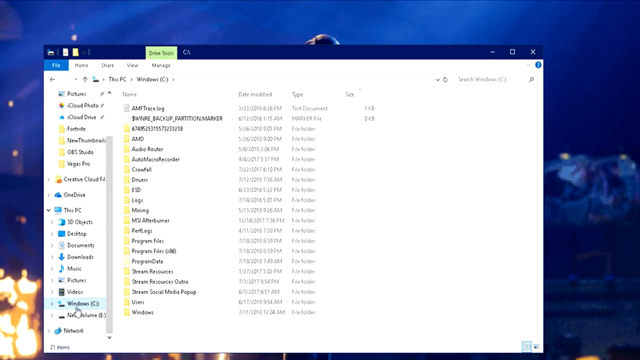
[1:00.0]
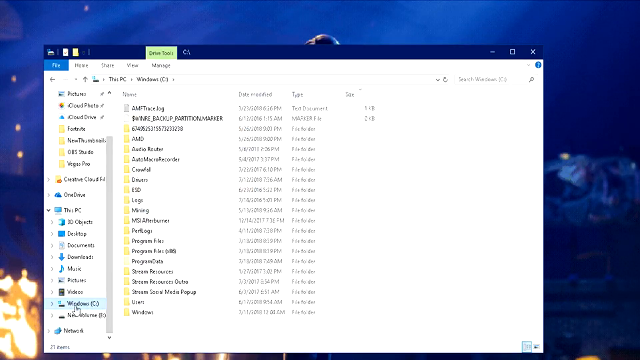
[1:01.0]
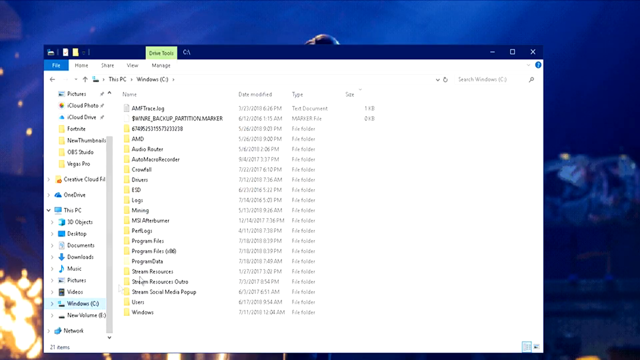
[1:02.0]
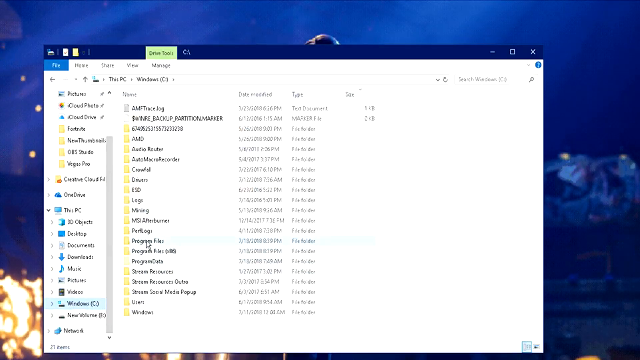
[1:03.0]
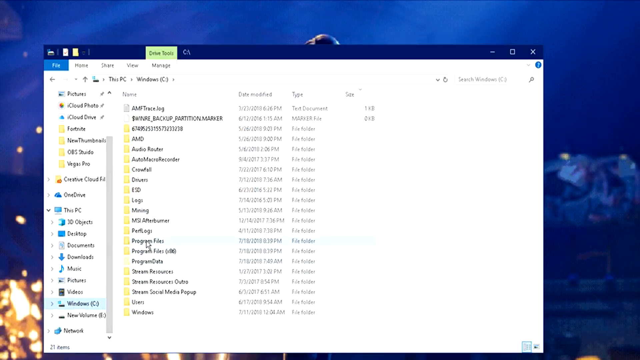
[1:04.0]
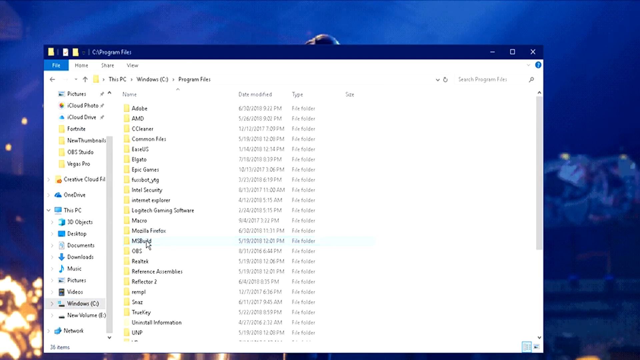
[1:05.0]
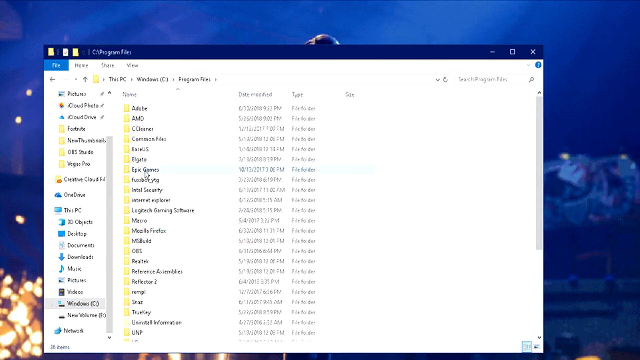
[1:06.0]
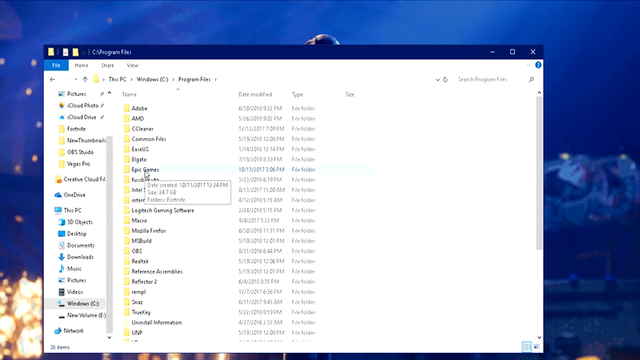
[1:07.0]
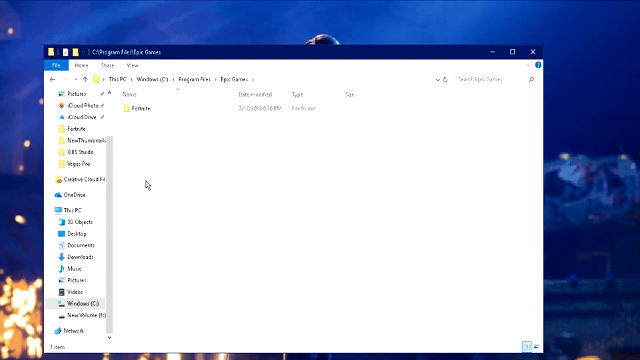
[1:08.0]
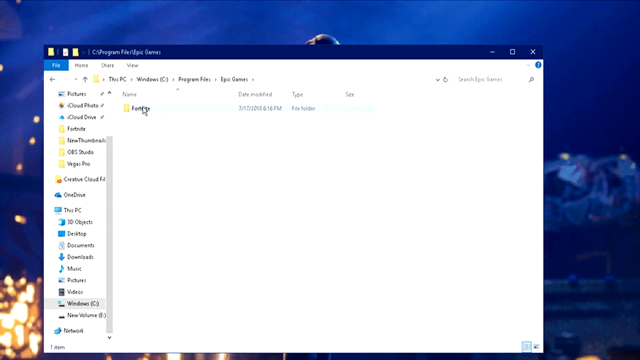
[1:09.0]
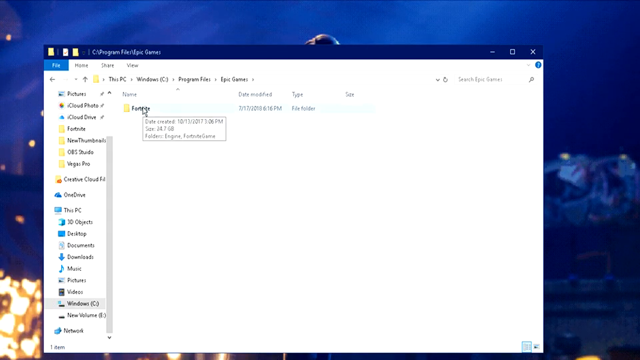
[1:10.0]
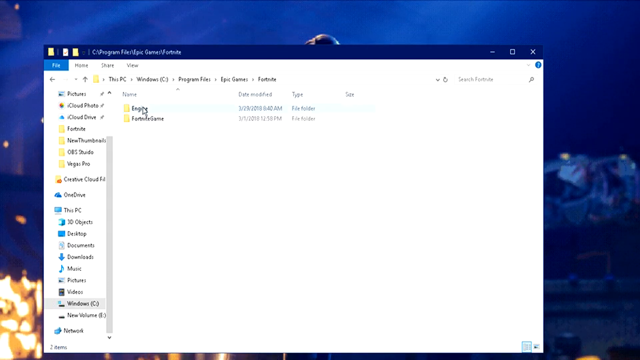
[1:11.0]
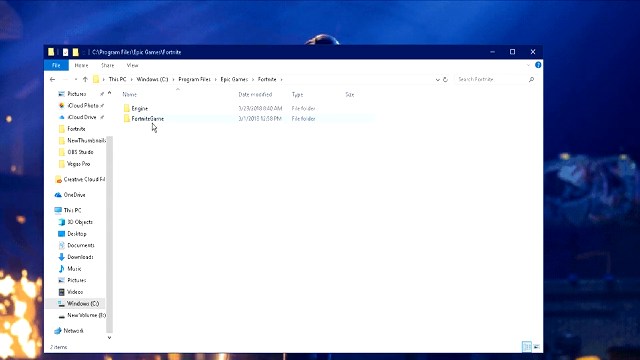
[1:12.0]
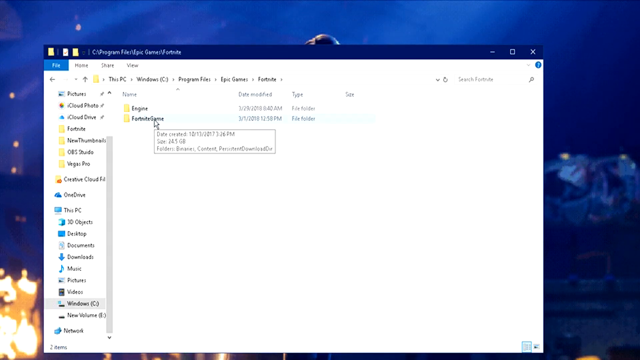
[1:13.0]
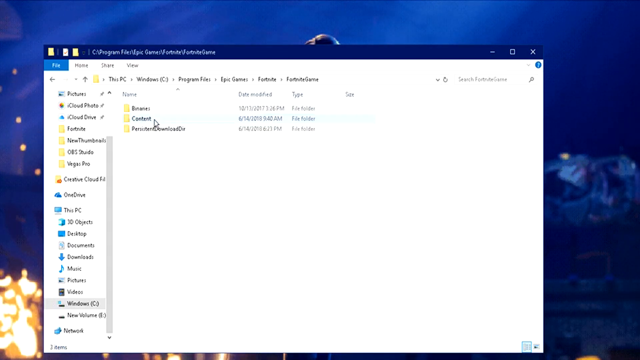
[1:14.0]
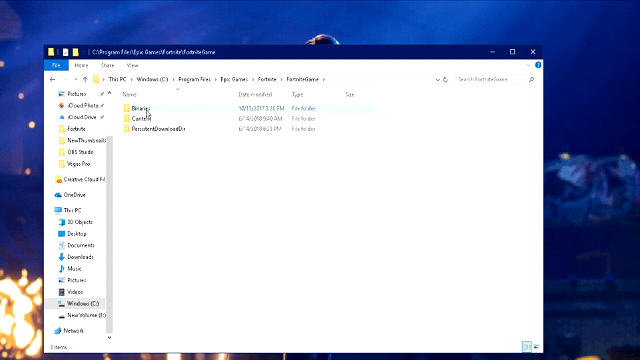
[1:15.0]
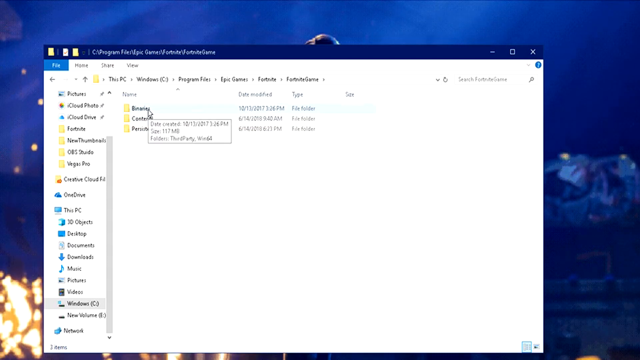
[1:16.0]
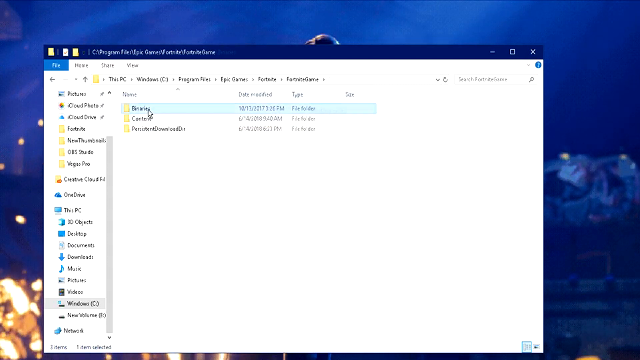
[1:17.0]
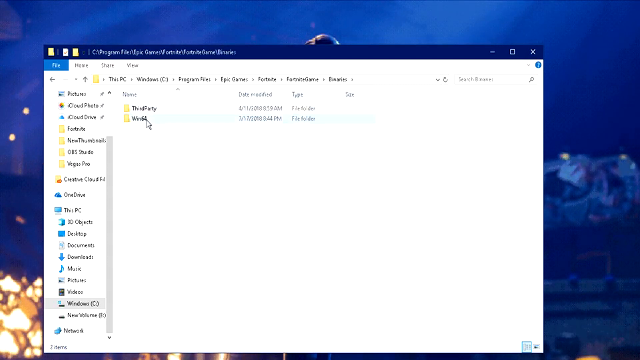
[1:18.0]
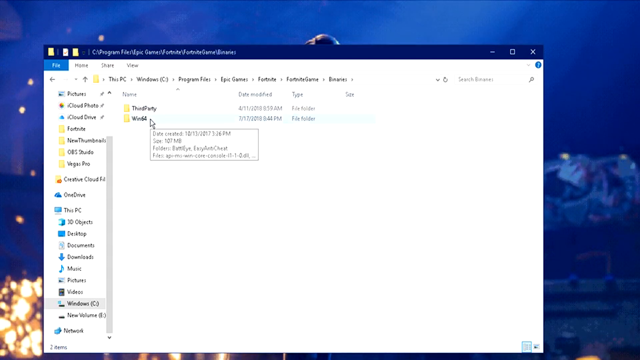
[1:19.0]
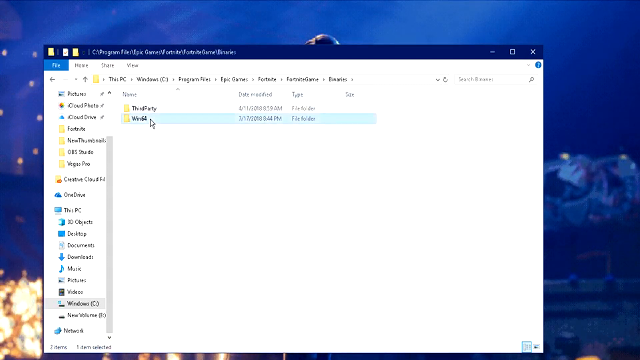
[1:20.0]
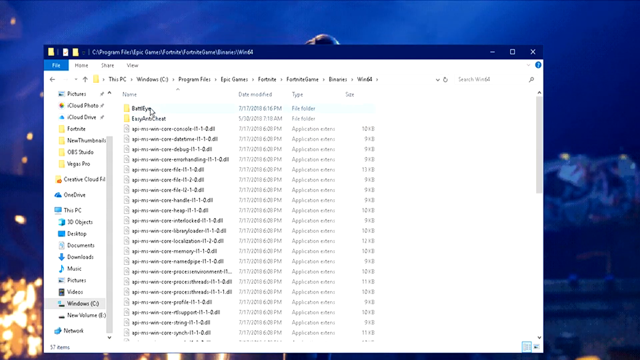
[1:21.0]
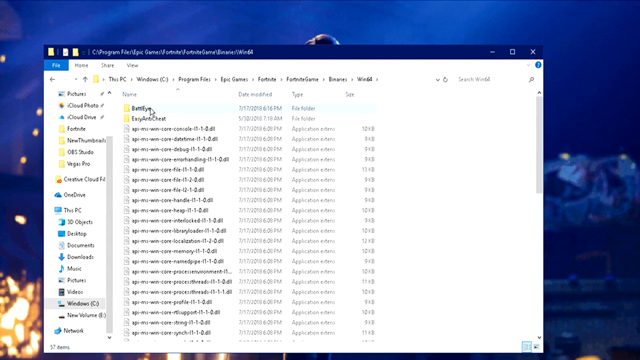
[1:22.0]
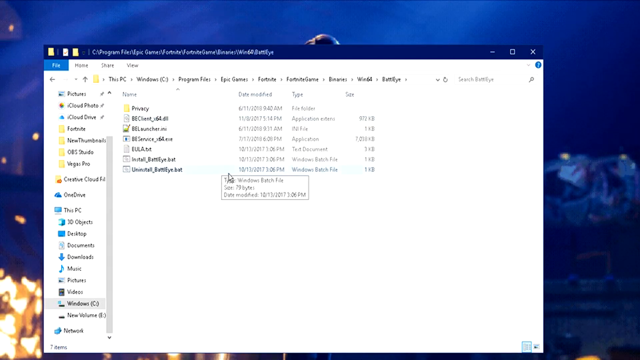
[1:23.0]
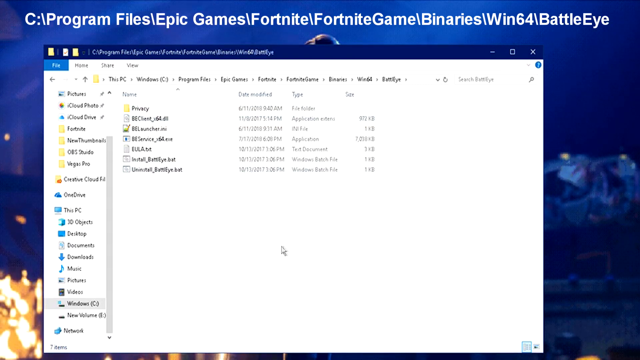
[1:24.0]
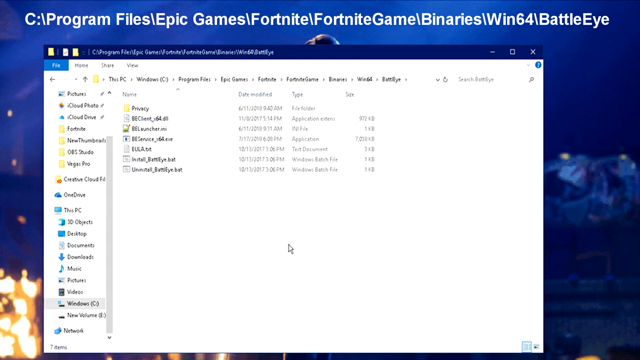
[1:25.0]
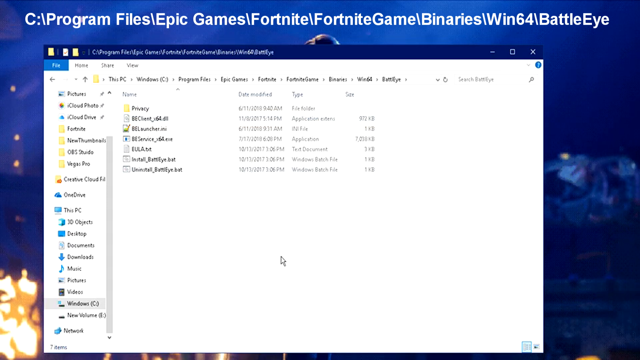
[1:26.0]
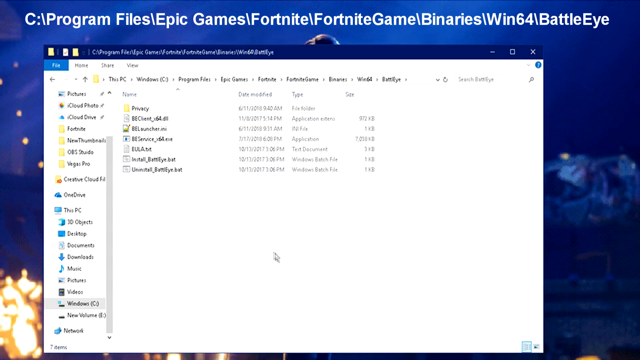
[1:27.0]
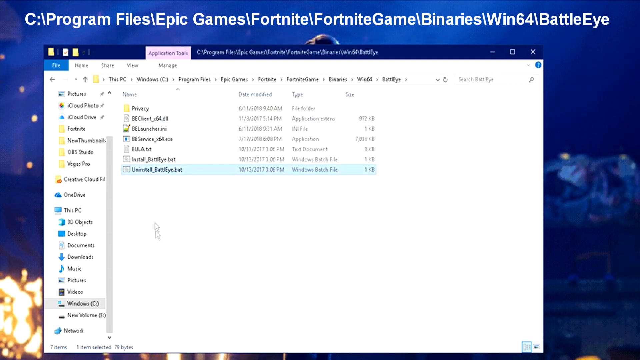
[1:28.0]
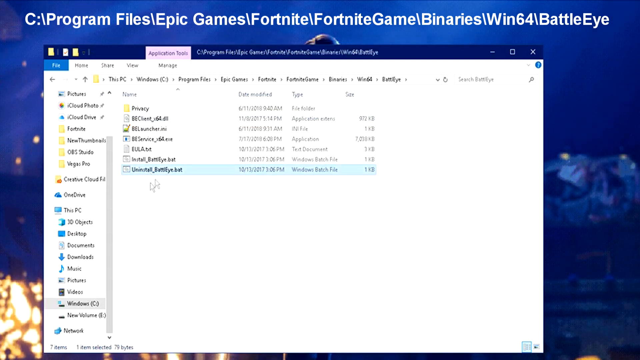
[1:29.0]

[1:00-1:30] A new window pops up with a bunch of different files. He clicks into the program files on his computer, where more files appear, then clicks on one of the program files, Fortnite, and goes into the Fortnite game. The text is a bit blurry, but he clicks through a bunch of these files, nine layers deep, until he finally opens a text file. Dozens of files are visible as he clicks through, but the text is too blurry to read. The background still shows what looks to be John Wick, a man with a very dark beard who resembles Keanu Reeves, with longish dark hair and a long dark beard.